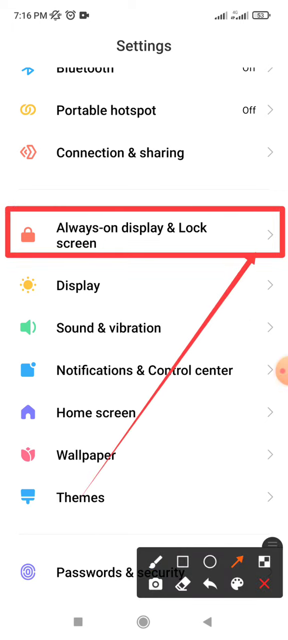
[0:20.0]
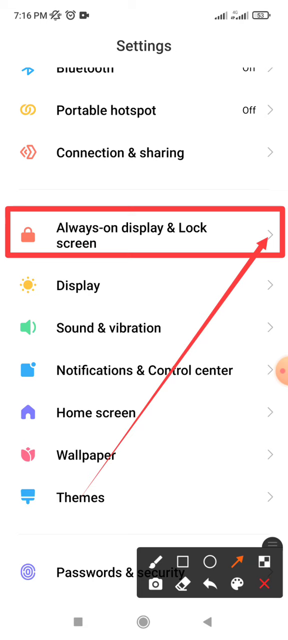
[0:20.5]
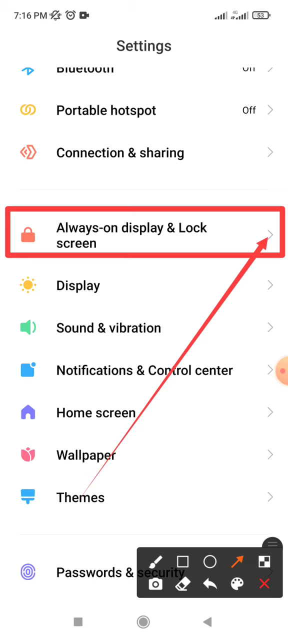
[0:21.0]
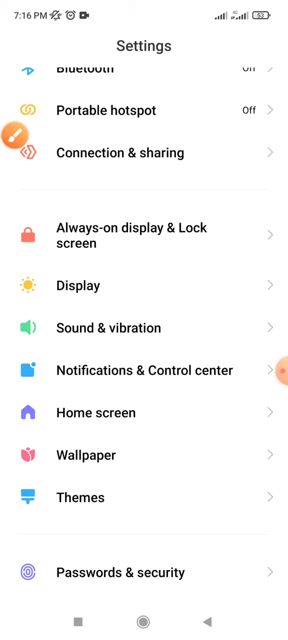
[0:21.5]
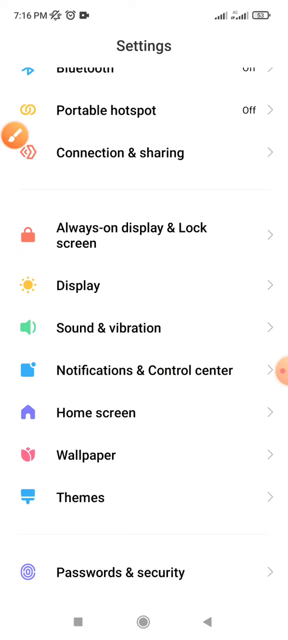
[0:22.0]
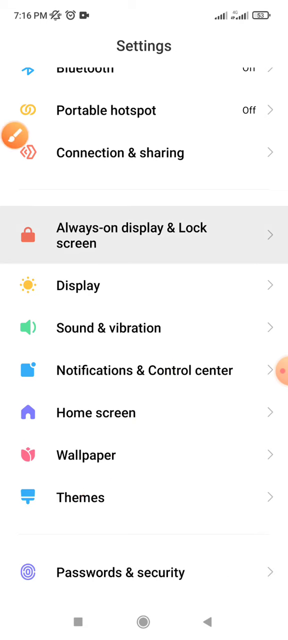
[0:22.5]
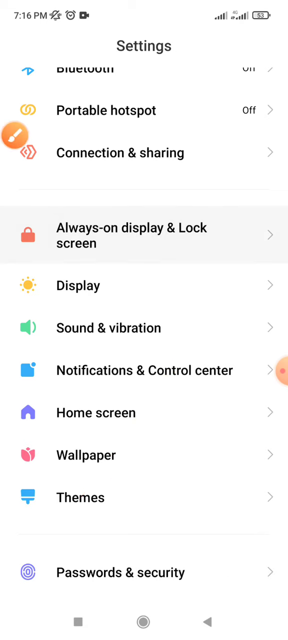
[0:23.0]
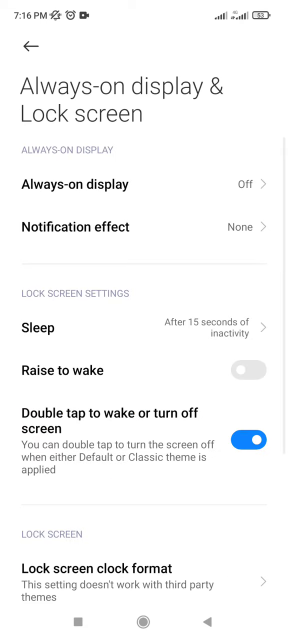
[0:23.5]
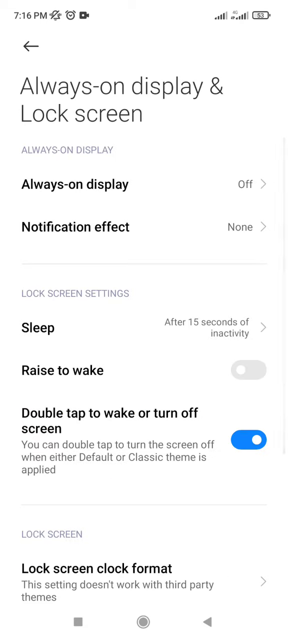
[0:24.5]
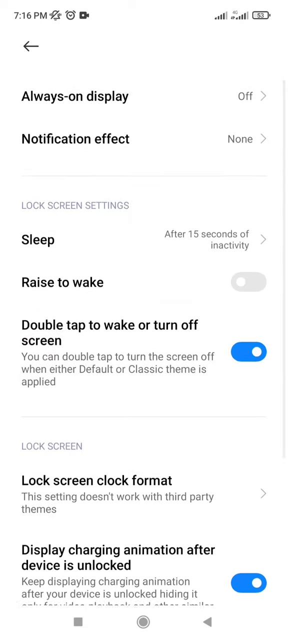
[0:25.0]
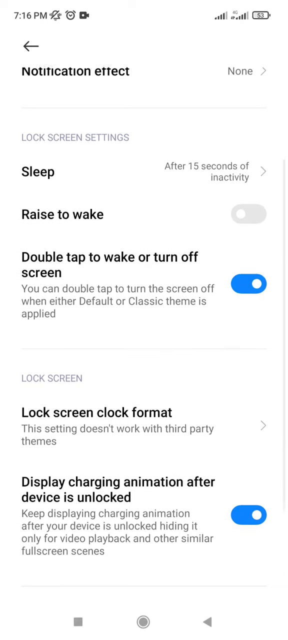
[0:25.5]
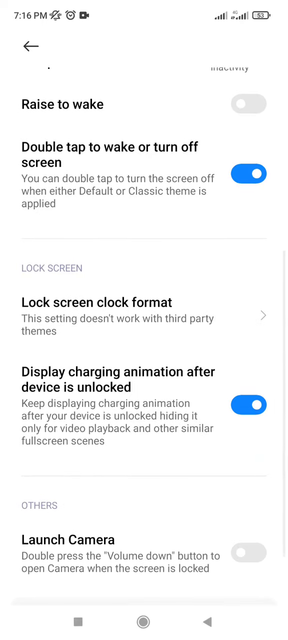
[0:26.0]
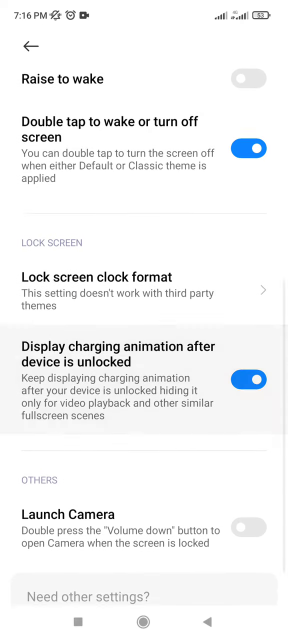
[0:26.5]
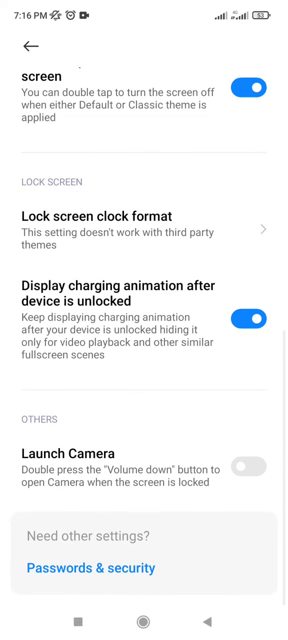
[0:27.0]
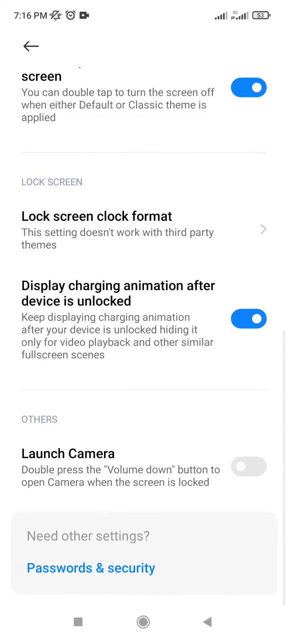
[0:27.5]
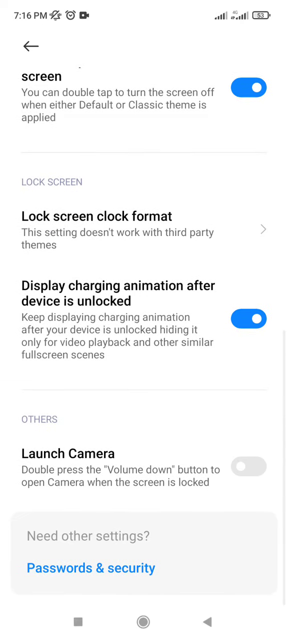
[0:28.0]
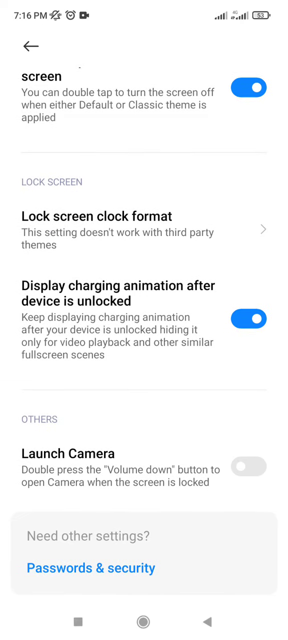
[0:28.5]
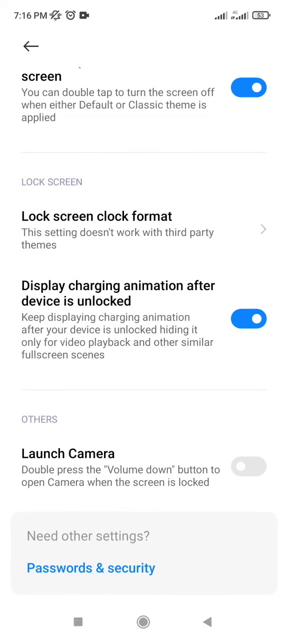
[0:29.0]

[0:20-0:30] Someone is in the settings menu of a cell phone and taps the display and lock screen option. Inside those settings, they scroll down, revealing which options are turned on and which are off. The always on display appears to be off, and waking the phone when it is picked up seems to be turned off. Double-tap to wake or turn off screen looks like it is turned on, and display charging animation after device is locked also appears to be on. The option to launch the camera while the screen is locked is not turned on.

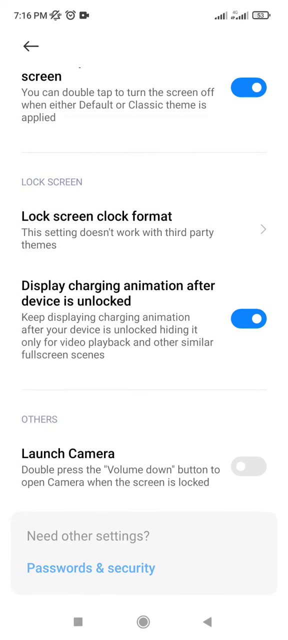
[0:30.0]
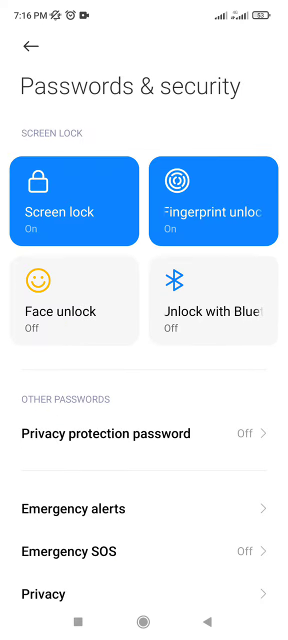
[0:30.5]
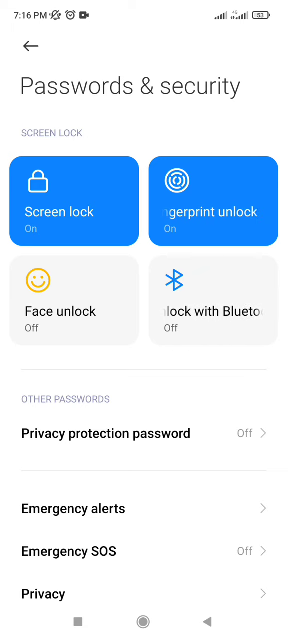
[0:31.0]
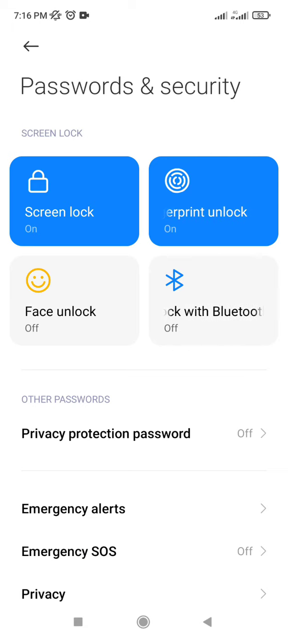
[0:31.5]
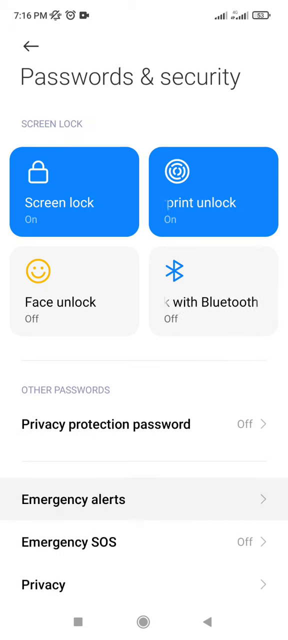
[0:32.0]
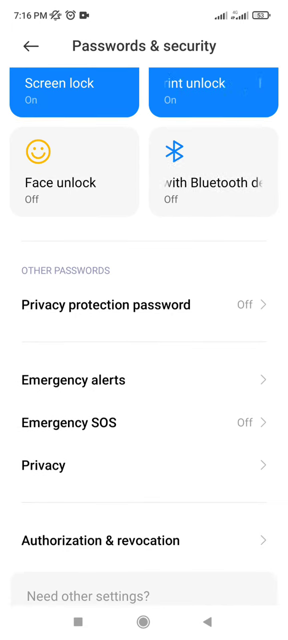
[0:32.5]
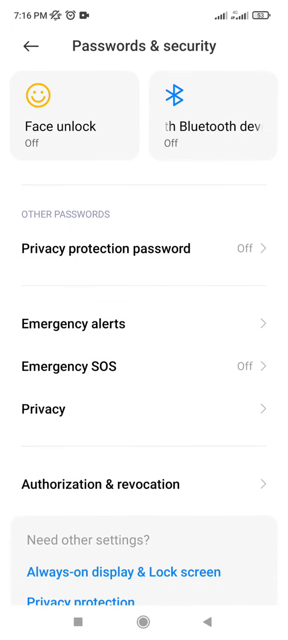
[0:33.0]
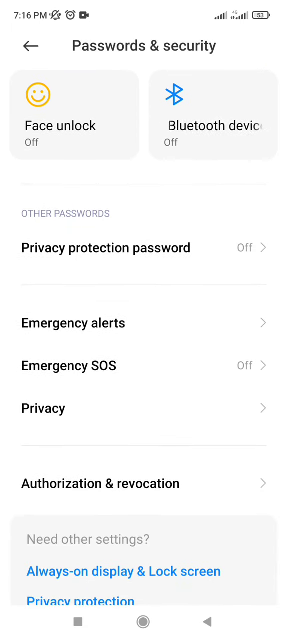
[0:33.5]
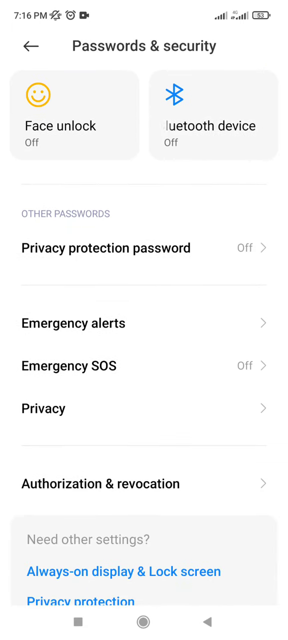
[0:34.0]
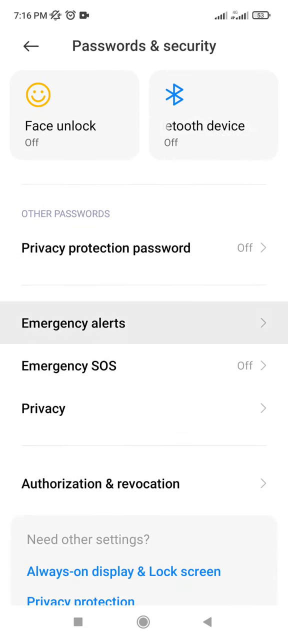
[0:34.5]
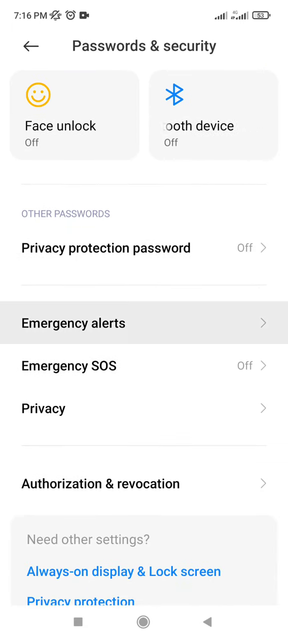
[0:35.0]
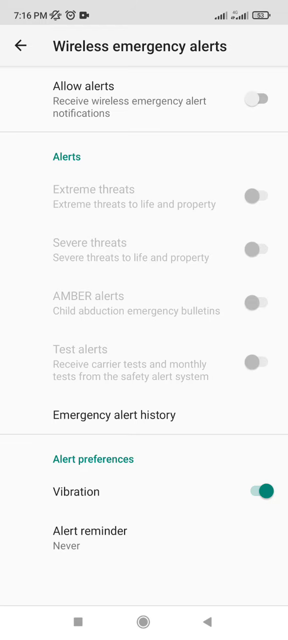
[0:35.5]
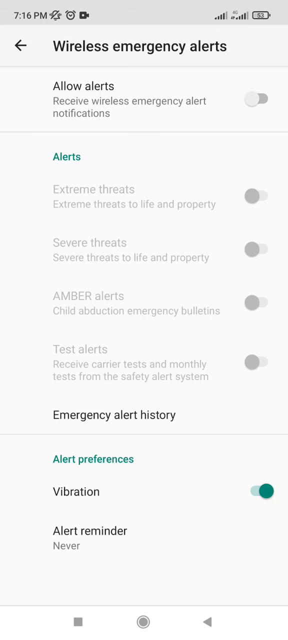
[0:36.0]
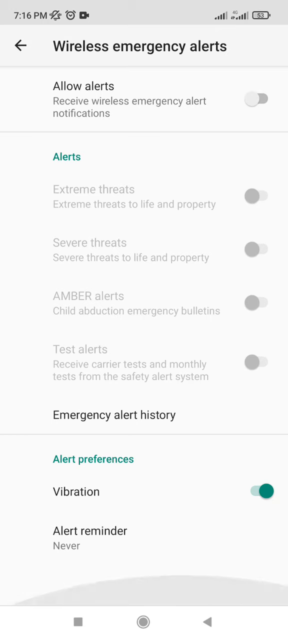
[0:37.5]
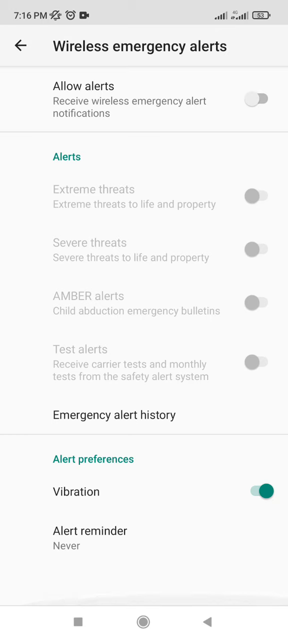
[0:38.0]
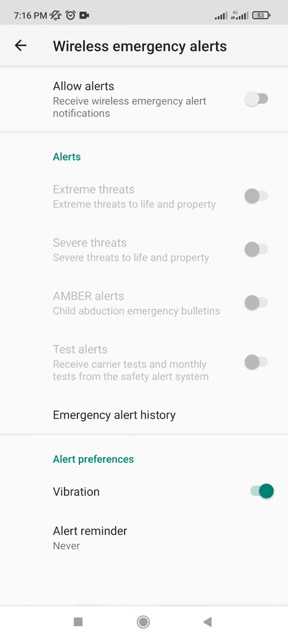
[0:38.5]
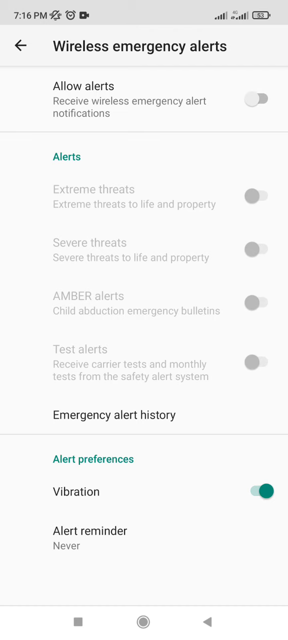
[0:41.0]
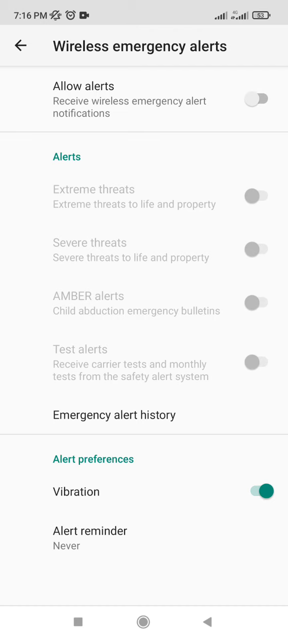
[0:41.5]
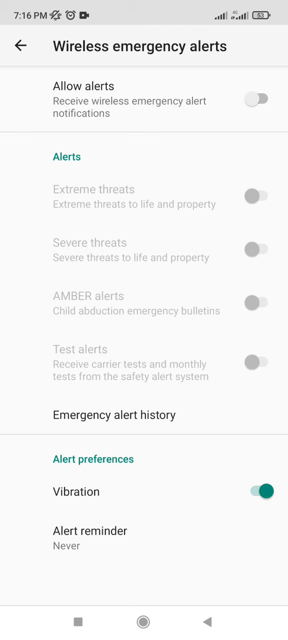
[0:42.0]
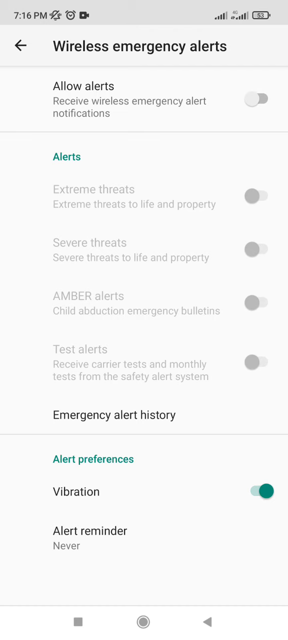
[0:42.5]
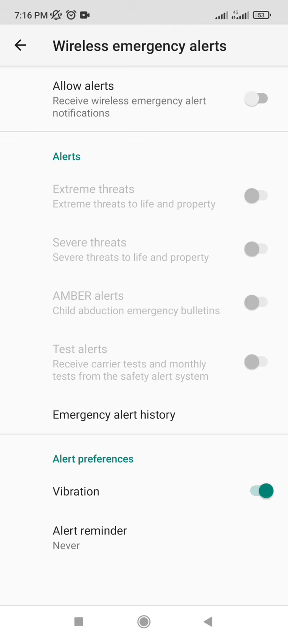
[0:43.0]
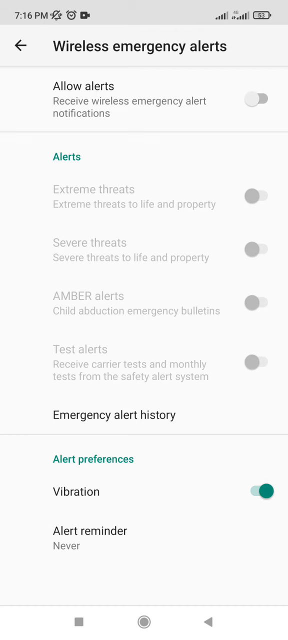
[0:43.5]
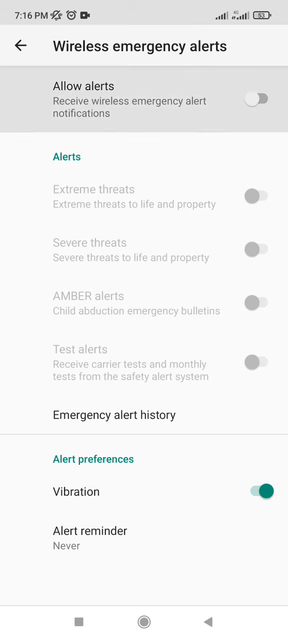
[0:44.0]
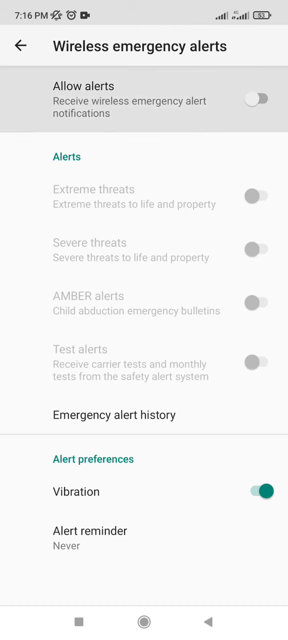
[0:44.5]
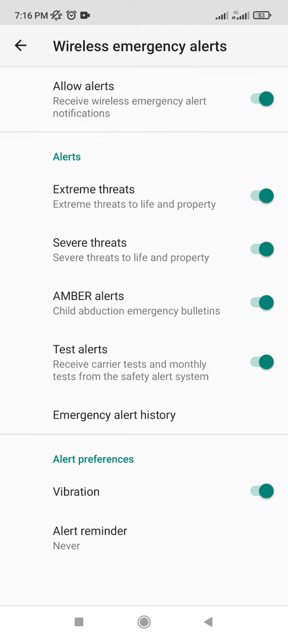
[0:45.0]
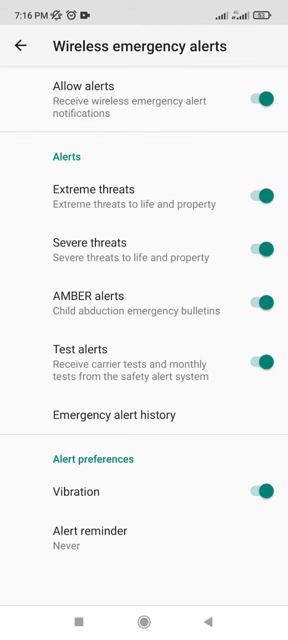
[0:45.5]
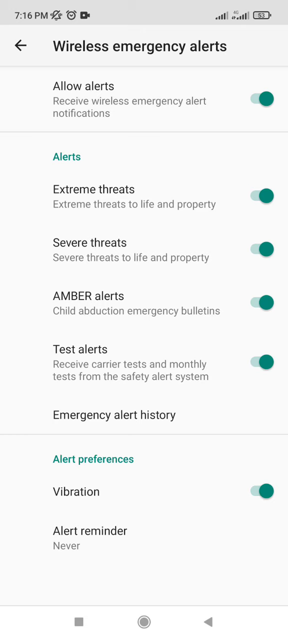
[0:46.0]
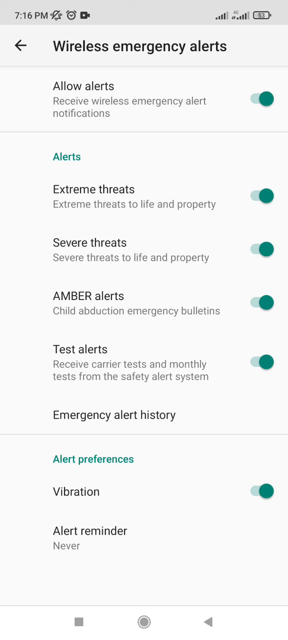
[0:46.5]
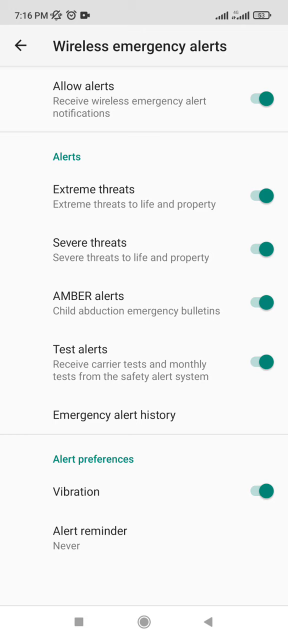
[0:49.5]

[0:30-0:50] The person is in the privacy and security section of their phone's settings, scrolling down through the various options that are checked on or off. The screen then changes to wireless emergency alerts, where all of the options are initially unselected, and the person switches every alert on. Near the end, the date shows on the right-hand side at the top of the screen, along with what looks like a small bell with a line through it, possibly indicating notifications are turned off. There is also an icon resembling a tiny alarm clock, possibly meaning an alarm is set, and what looks like a small video camera next to it, possibly indicating screen recording or video recording.